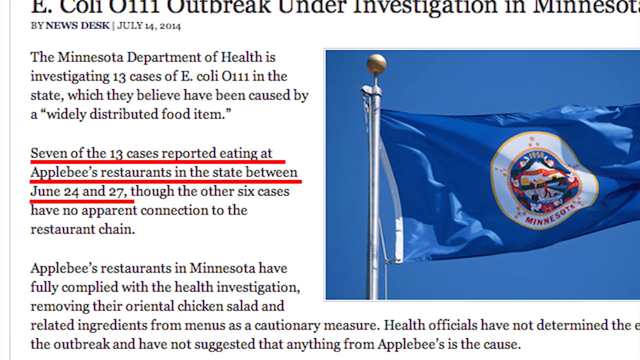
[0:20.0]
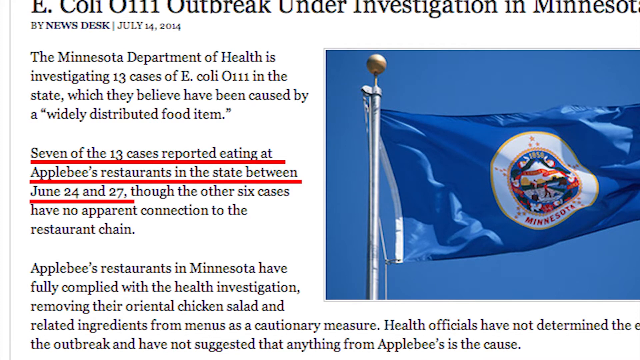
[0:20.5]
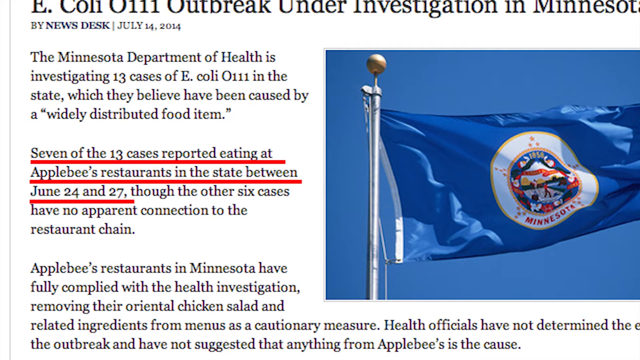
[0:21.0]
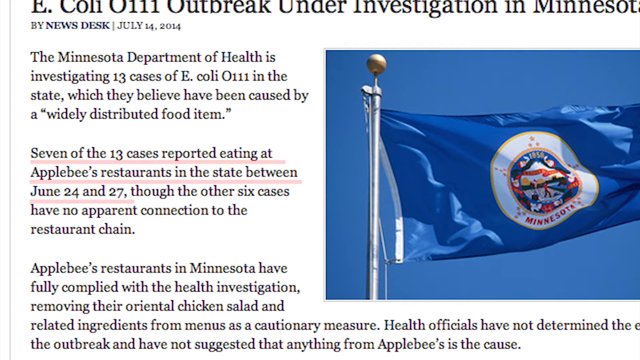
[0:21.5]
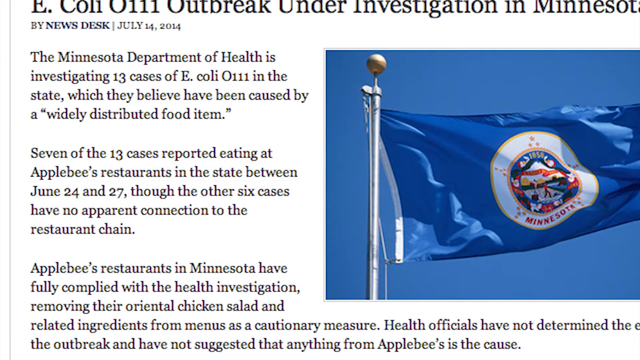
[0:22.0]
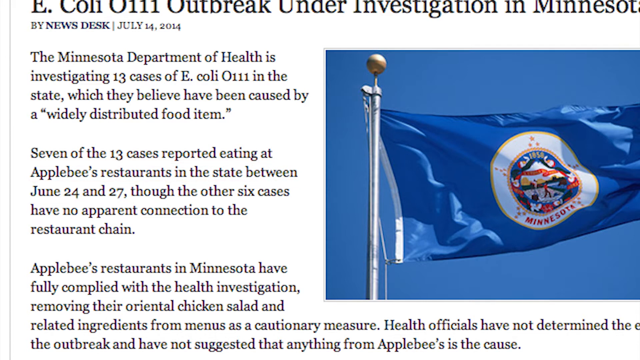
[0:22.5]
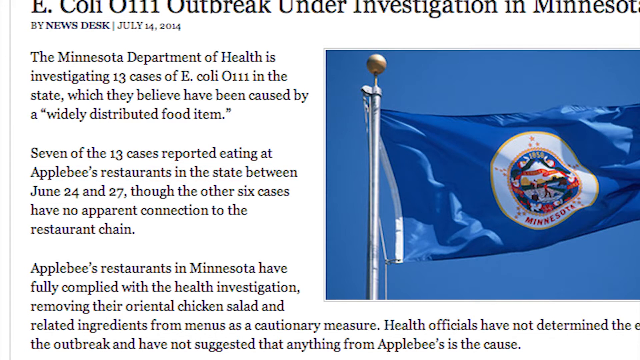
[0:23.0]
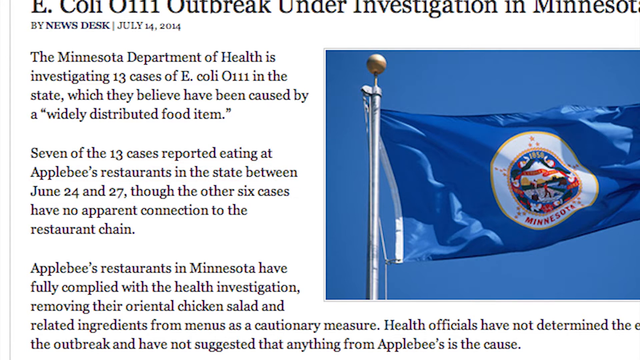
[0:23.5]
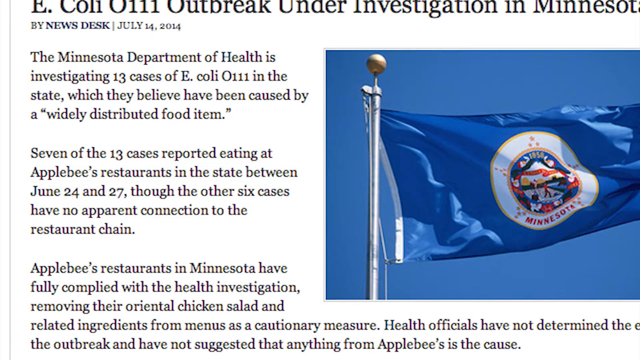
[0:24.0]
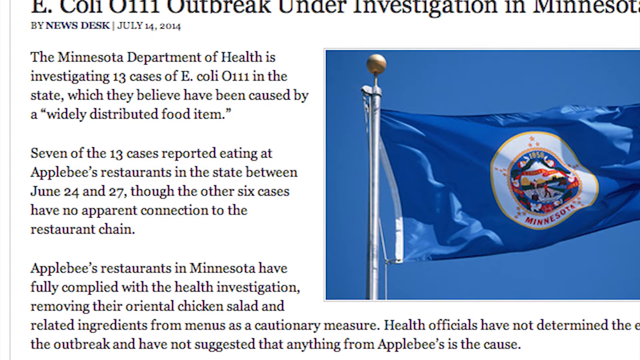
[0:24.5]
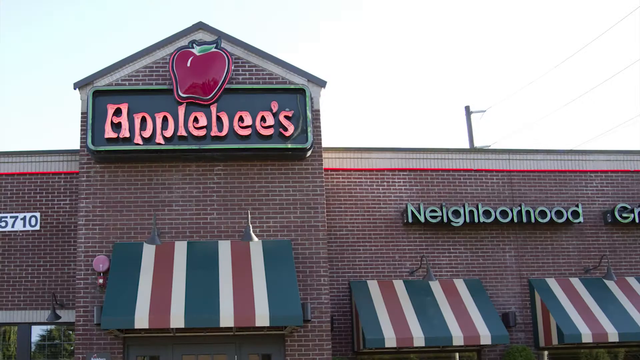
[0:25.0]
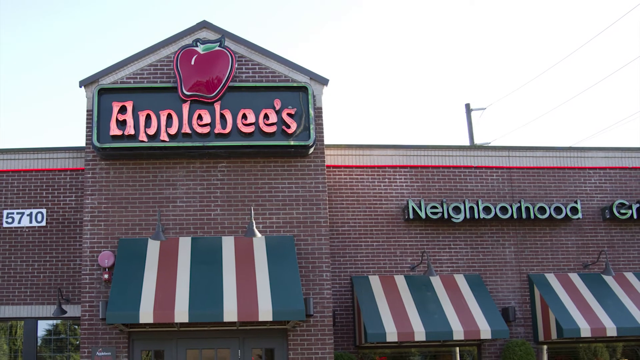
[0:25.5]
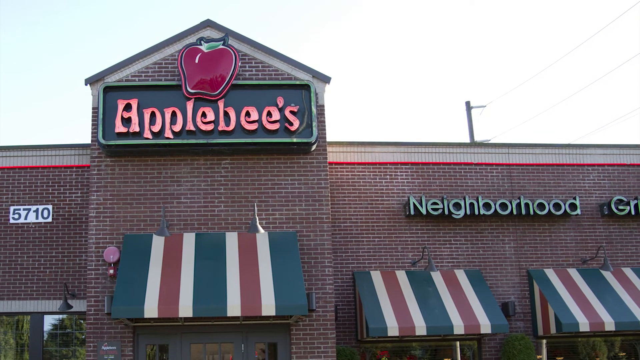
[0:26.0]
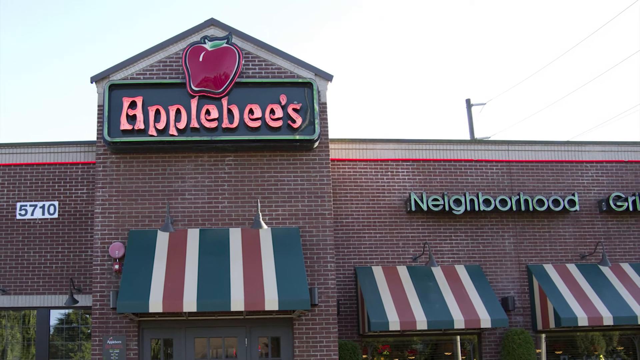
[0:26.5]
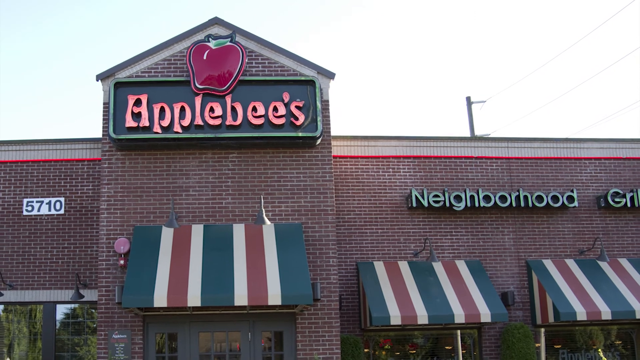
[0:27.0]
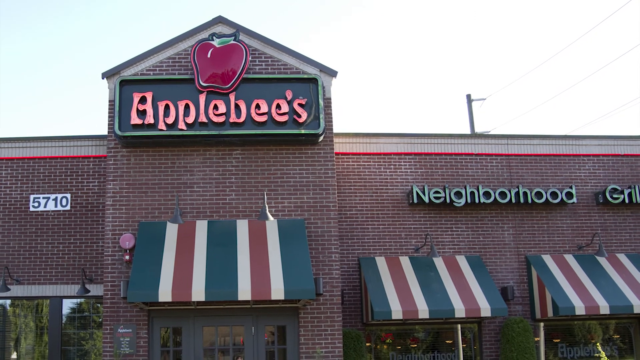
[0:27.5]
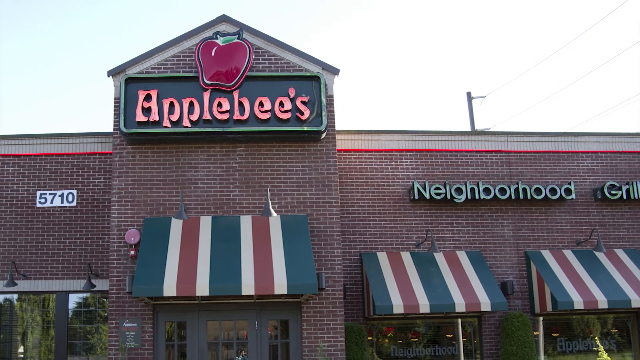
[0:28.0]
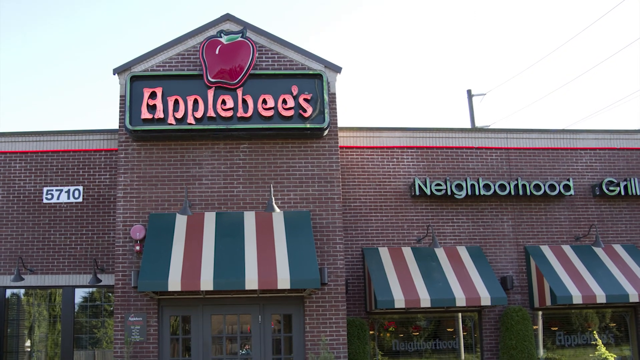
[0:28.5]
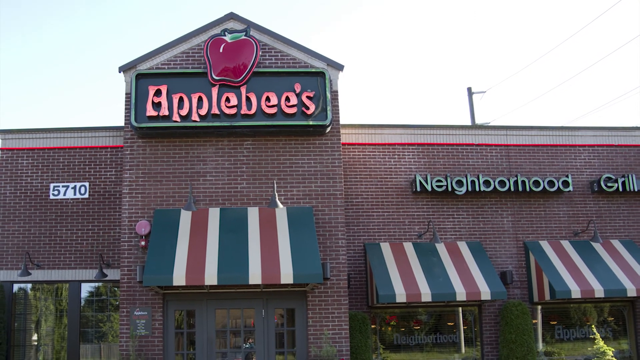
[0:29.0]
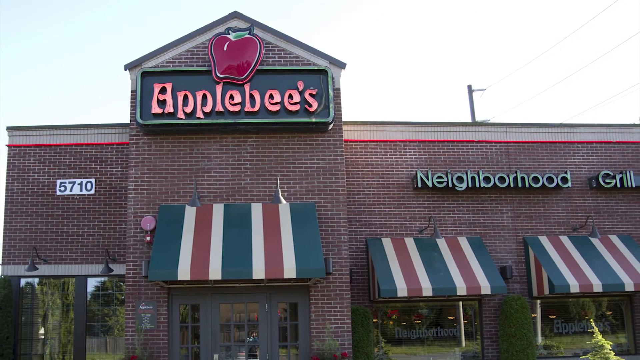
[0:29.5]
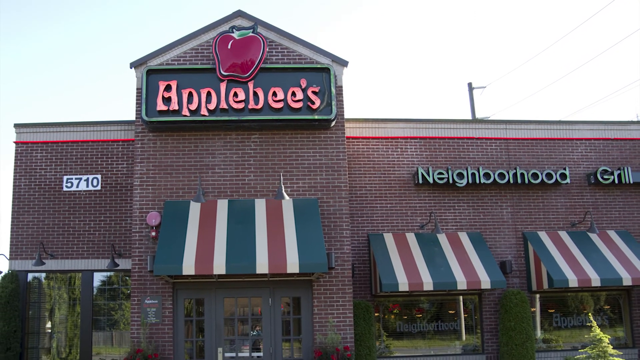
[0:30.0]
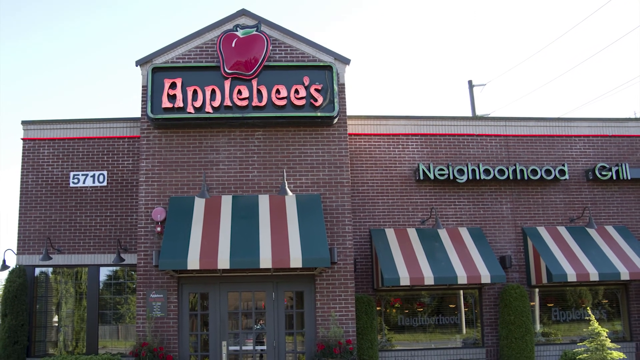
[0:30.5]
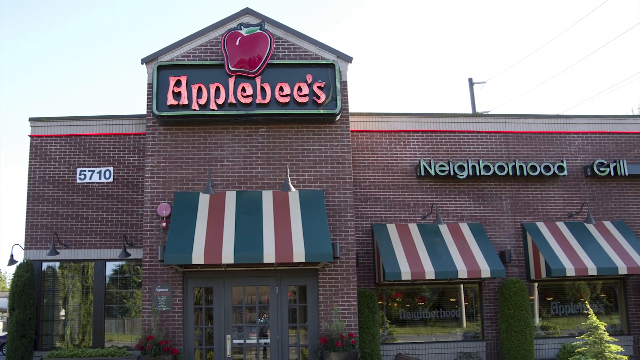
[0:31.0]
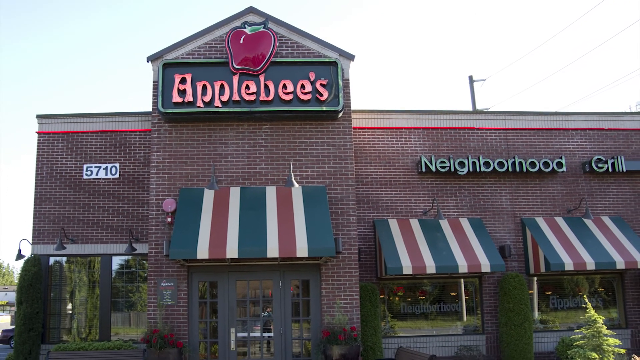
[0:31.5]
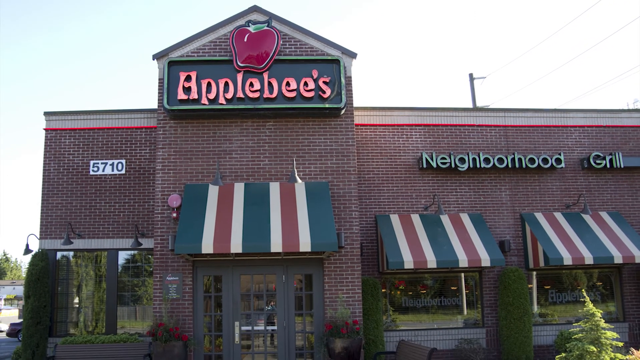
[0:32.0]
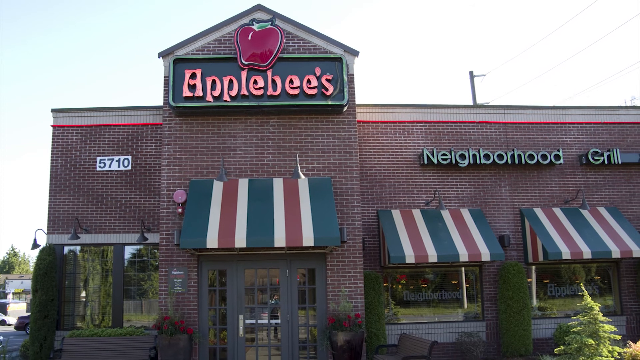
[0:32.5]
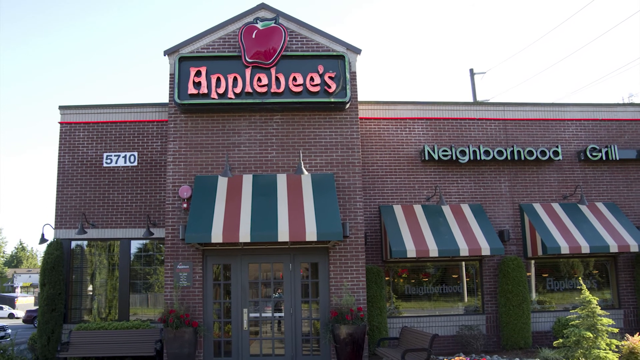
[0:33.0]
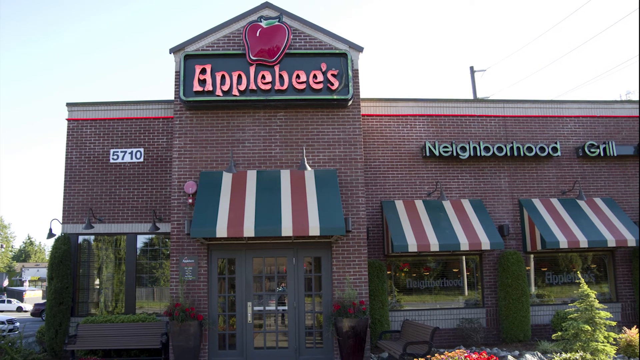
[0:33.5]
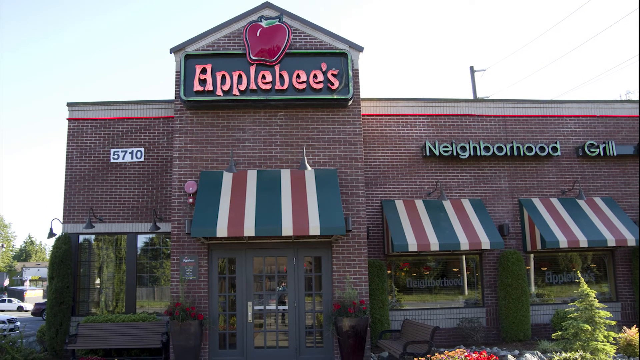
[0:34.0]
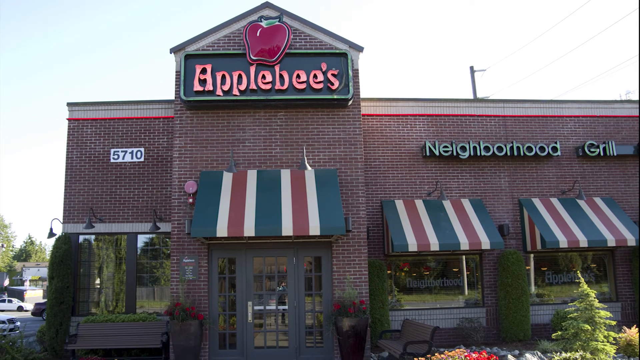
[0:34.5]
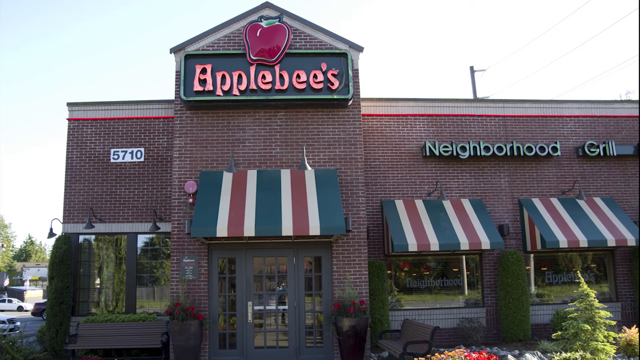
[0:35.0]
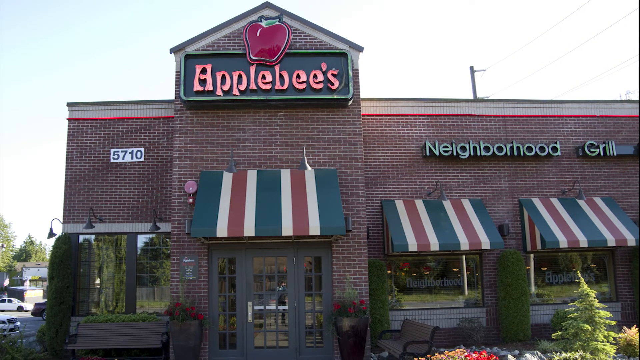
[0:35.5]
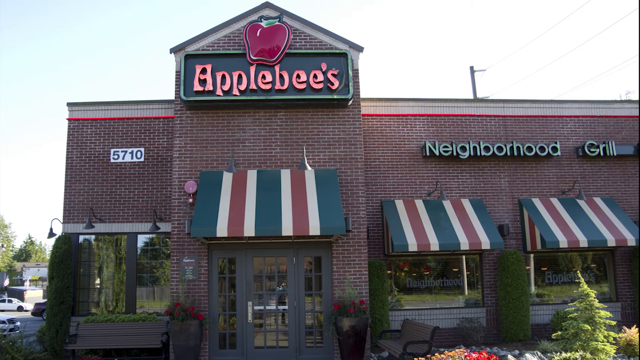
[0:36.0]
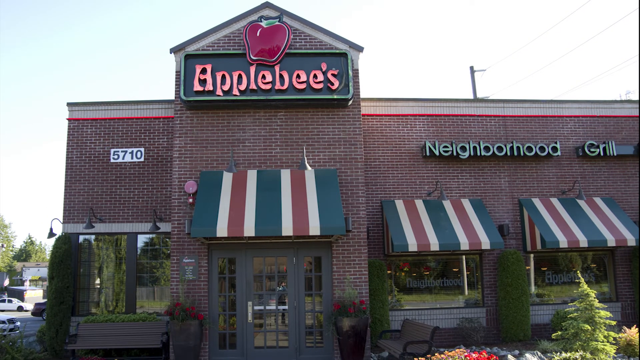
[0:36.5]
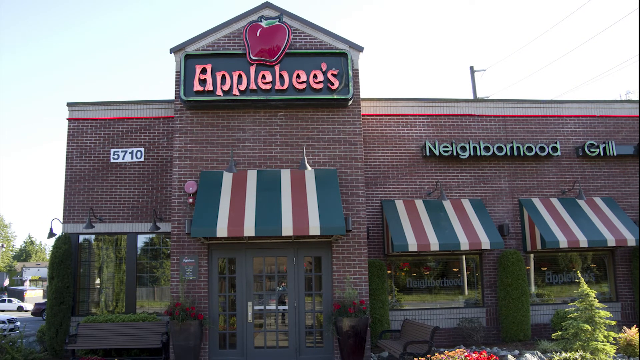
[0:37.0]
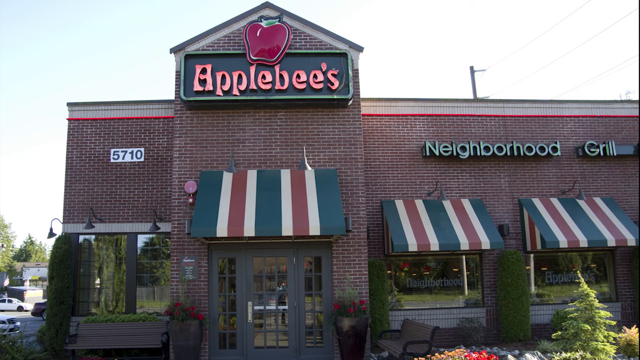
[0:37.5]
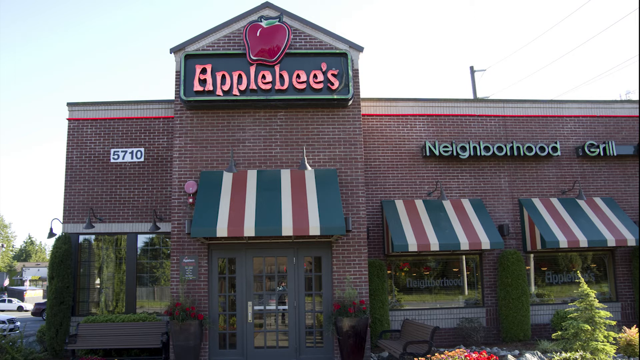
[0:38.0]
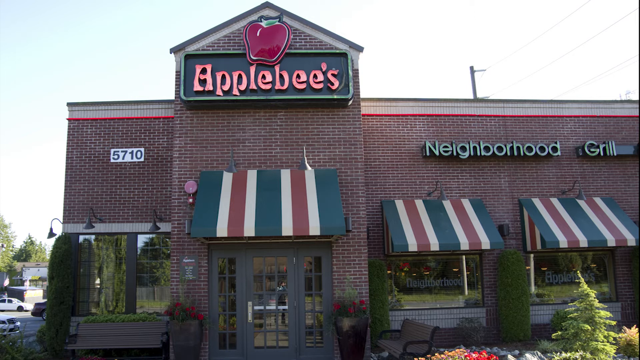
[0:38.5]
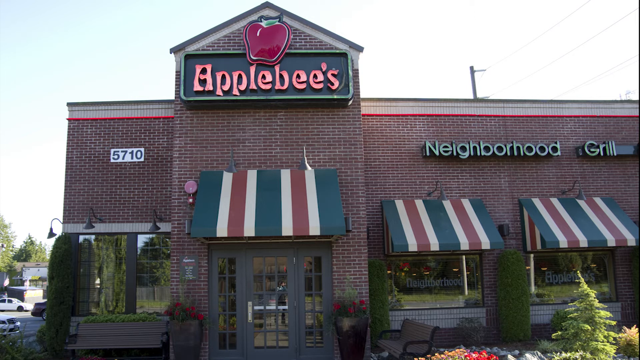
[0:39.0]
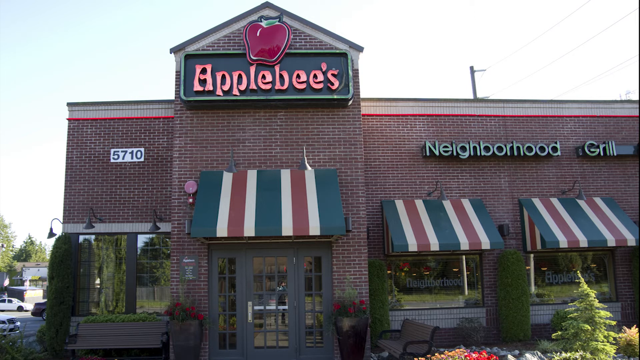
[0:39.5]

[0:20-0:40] An Applebee's restaurant is shown, with an apple above its sign. The apple does not look illuminated. The restaurant is a brick building, and the section bearing the Applebee's name sticks out. A red, white and green A-framed canopy is right above the single door leading to the entrance. White window segments run up and down to the left and right of the door, and business hours are posted to the left of the window at the front entrance. The left wall juts back and shows "5710," apparently the address. Beneath it is another set of windows, this time without a canopy. There are three curved lights, and one at the edge of the corner partly blocks the window. The words "neighborhood" and "grill" glow in green neon lights on the right side of the building. Right below that is another set of canopies over two windows; one says "neighborhood" and the one on the right says "Applebee's."